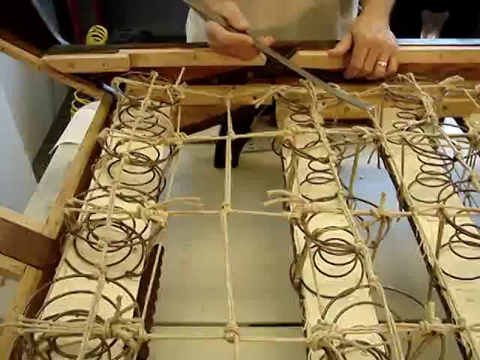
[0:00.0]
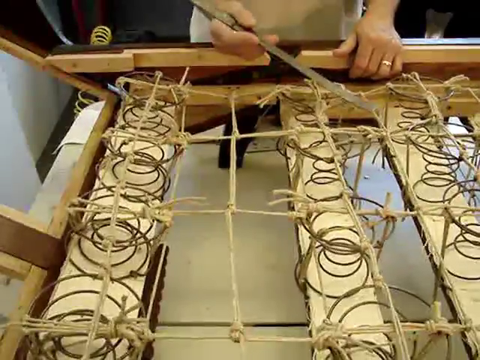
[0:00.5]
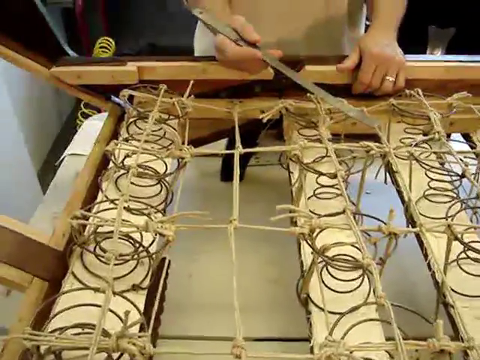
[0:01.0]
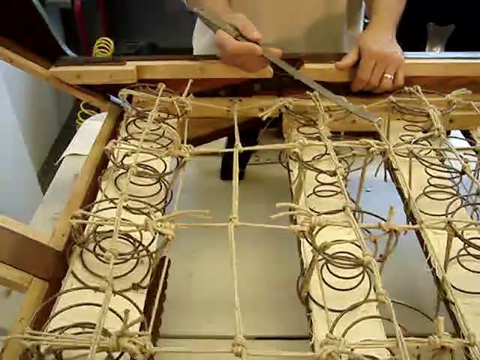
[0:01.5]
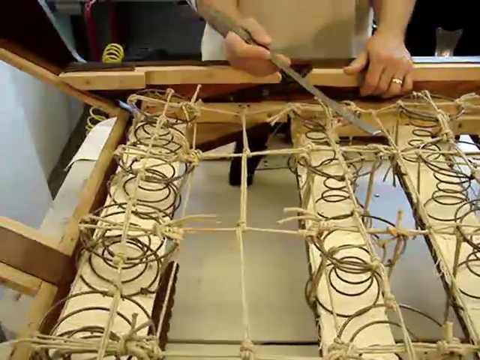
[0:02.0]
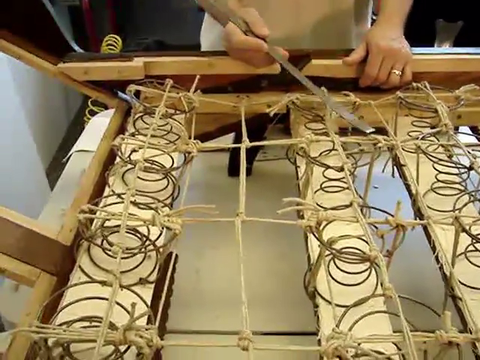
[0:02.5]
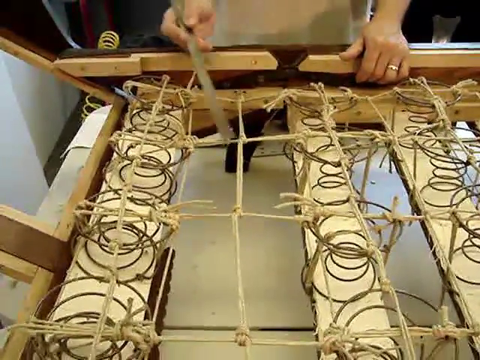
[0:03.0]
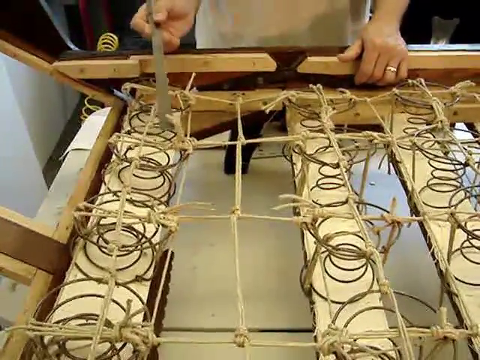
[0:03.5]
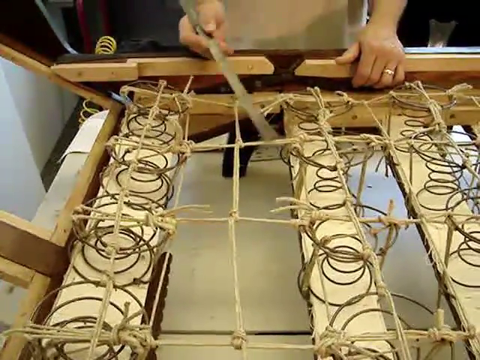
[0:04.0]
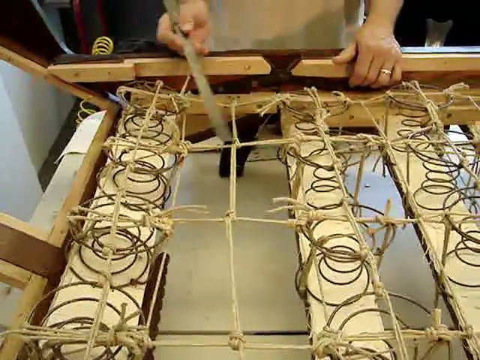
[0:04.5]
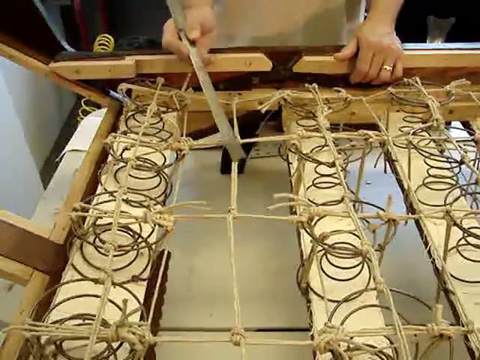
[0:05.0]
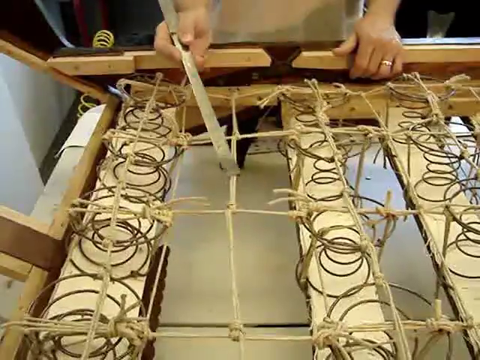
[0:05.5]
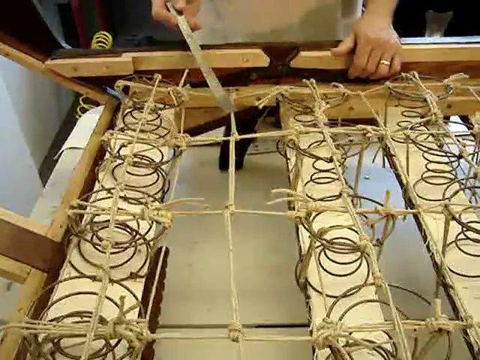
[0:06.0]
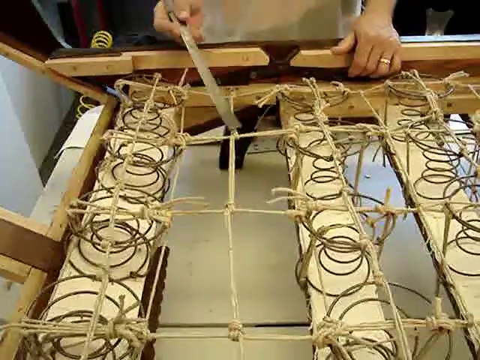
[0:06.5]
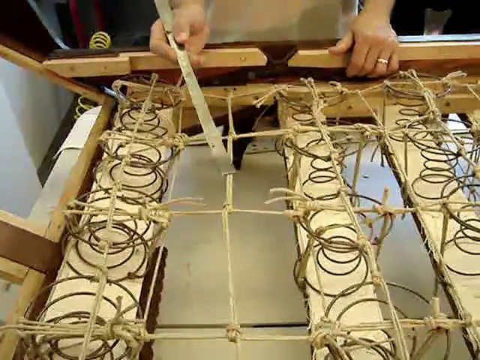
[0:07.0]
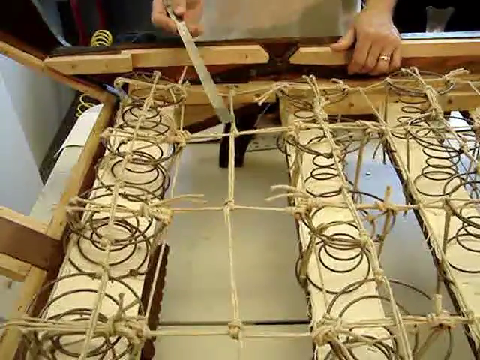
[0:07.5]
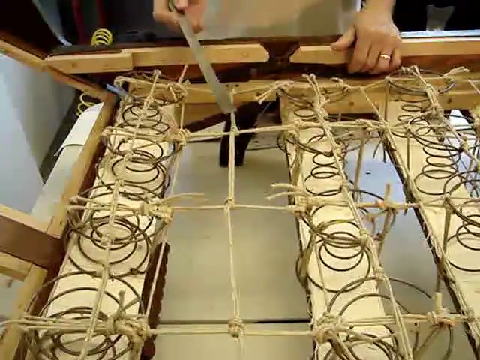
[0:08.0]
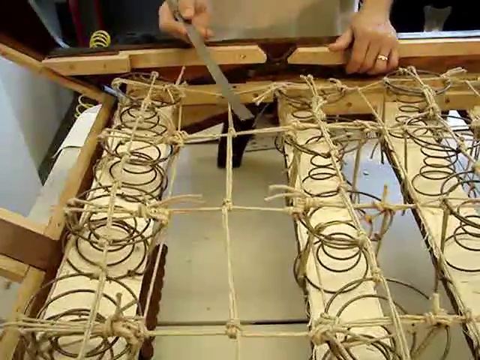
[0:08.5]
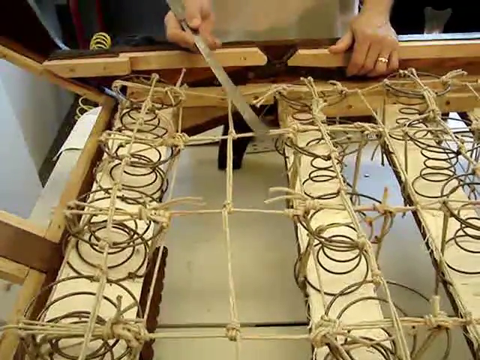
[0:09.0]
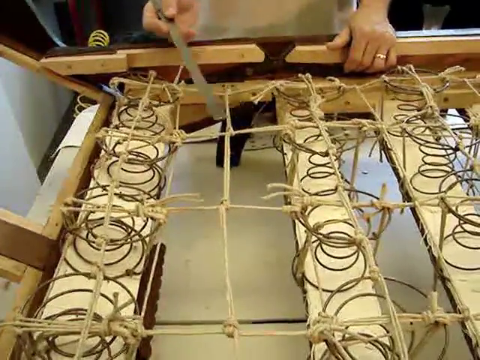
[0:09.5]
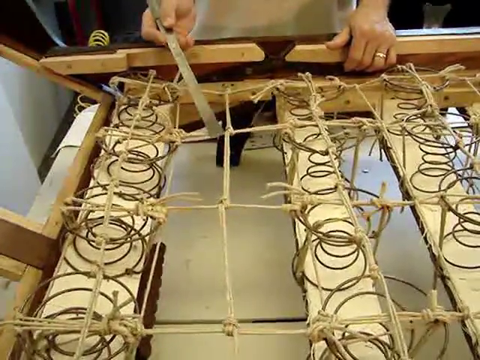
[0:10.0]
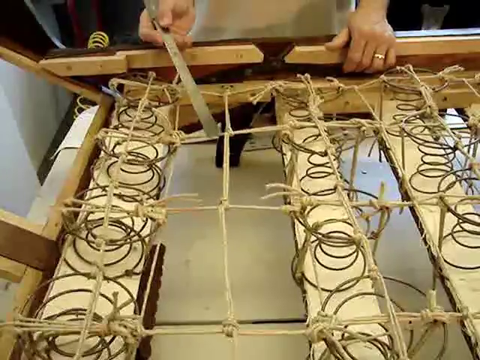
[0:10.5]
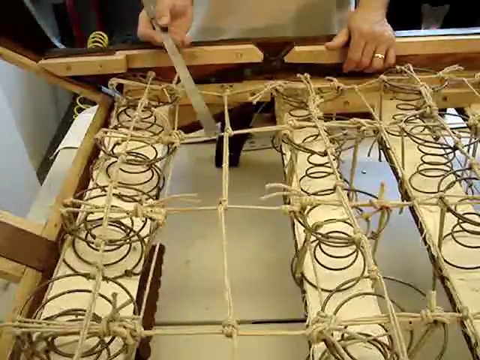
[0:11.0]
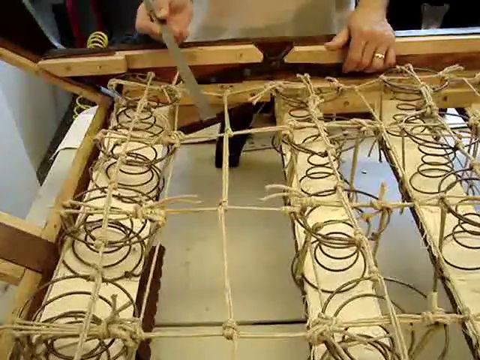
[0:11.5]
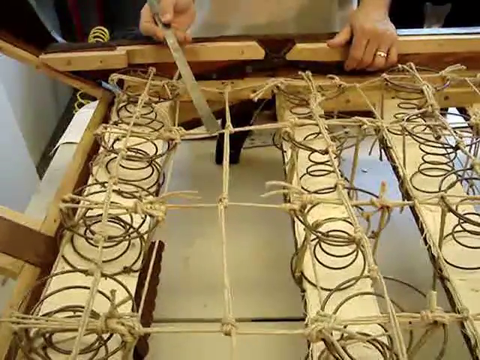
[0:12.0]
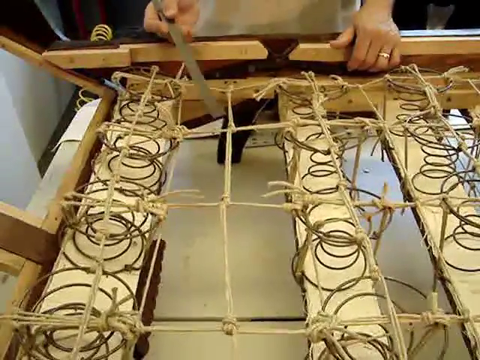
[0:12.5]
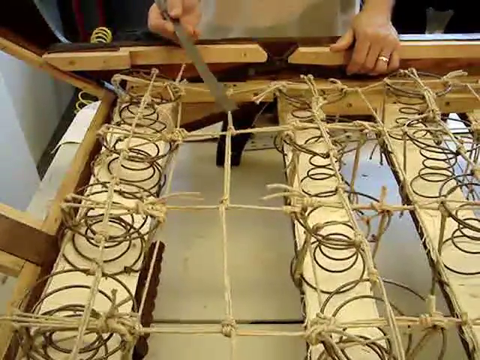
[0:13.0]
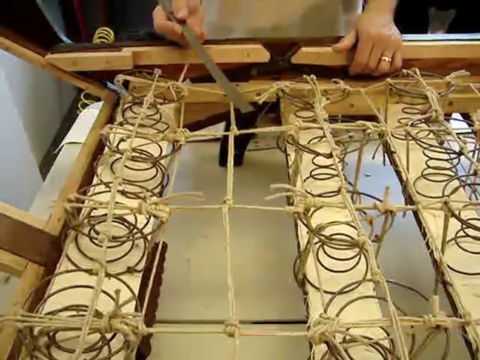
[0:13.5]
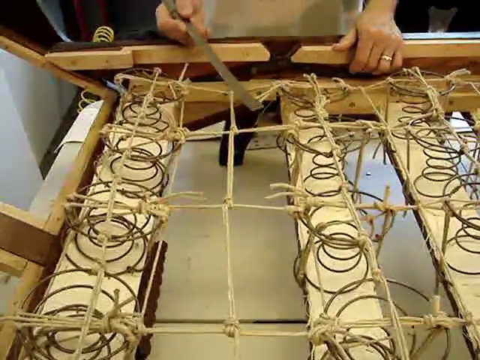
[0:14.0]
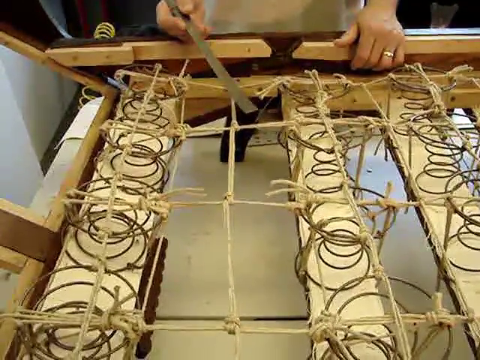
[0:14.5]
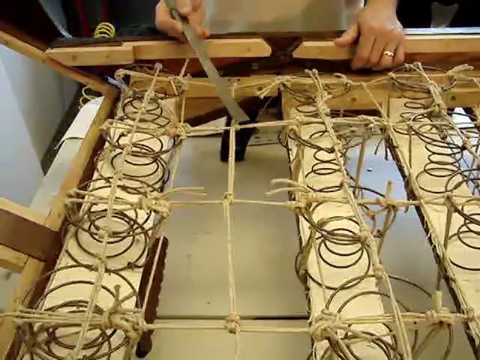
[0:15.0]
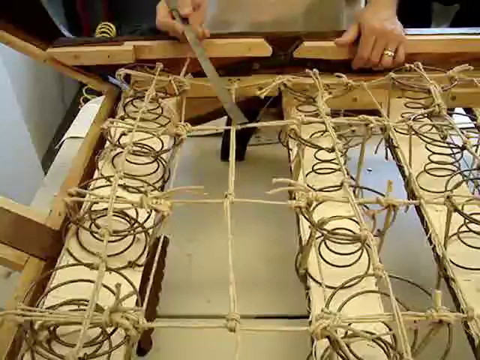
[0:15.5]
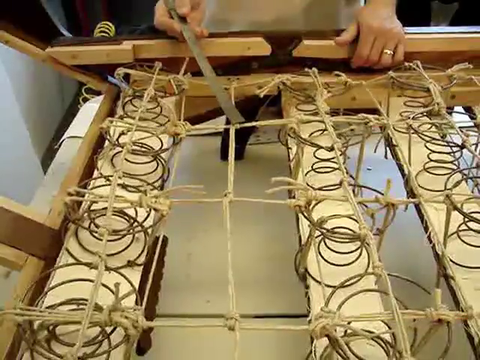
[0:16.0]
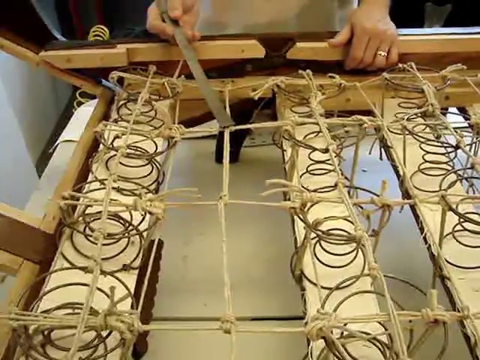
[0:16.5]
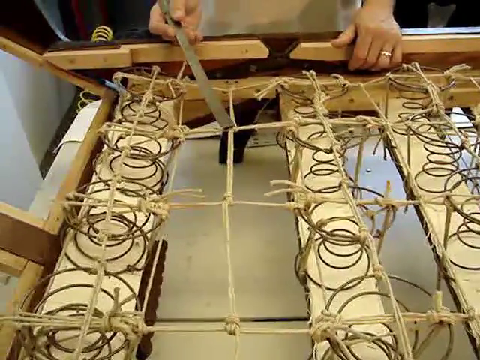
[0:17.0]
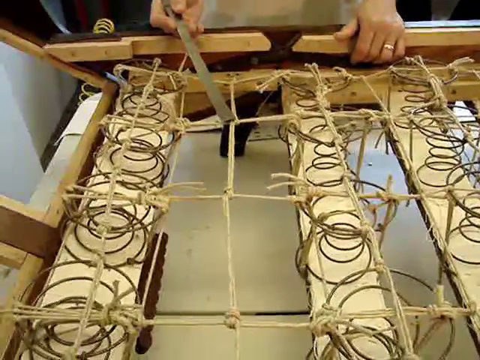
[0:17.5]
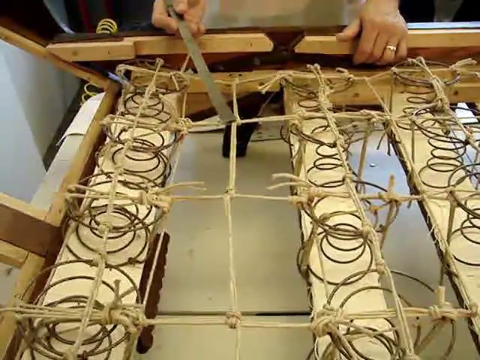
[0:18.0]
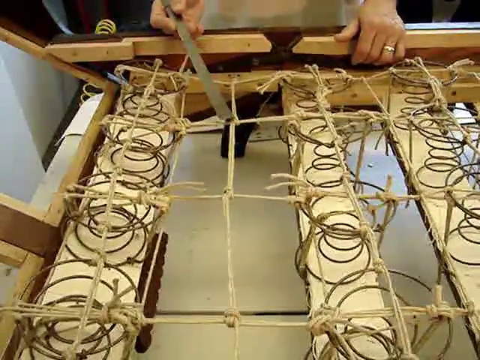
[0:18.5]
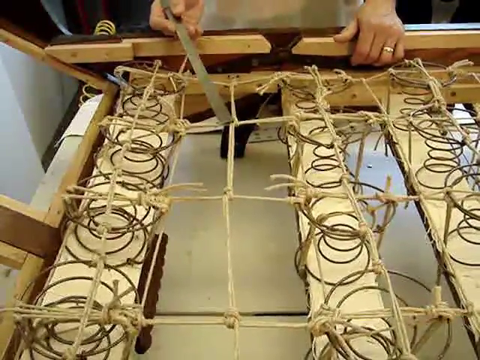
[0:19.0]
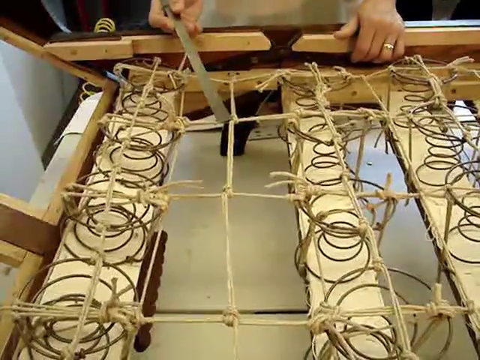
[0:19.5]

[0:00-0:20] A man works on some wood in his workshop. Springs are on top of the wood, and ropes are tied there; he is apparently trying to make something that probably looks like a bed. Wood is laid down underneath, attached to the springs on top, and everything is tied up. He shows how everything is done.